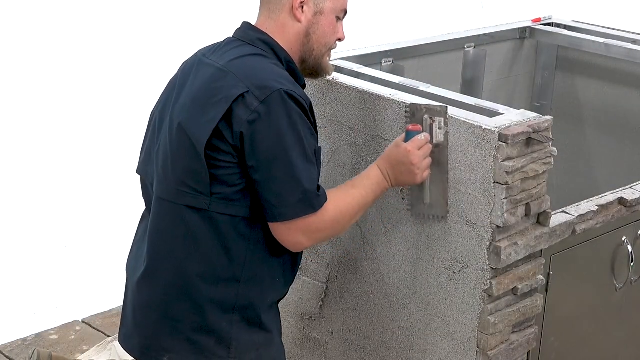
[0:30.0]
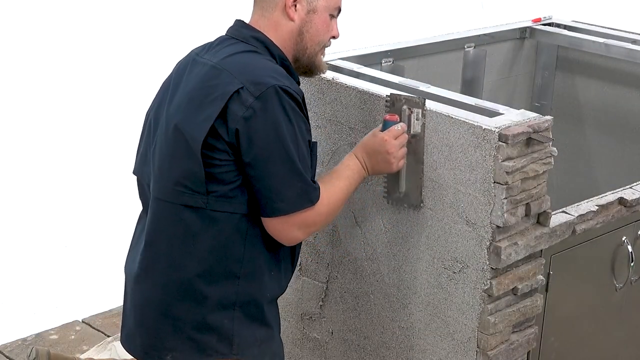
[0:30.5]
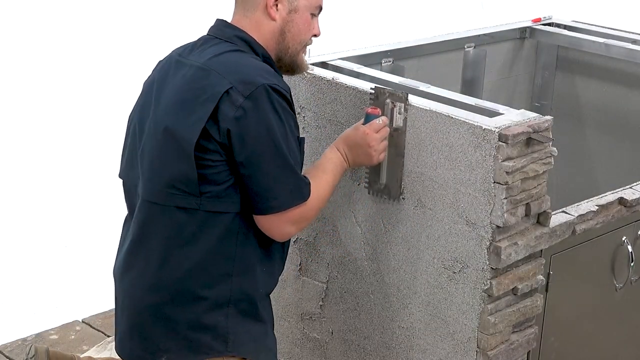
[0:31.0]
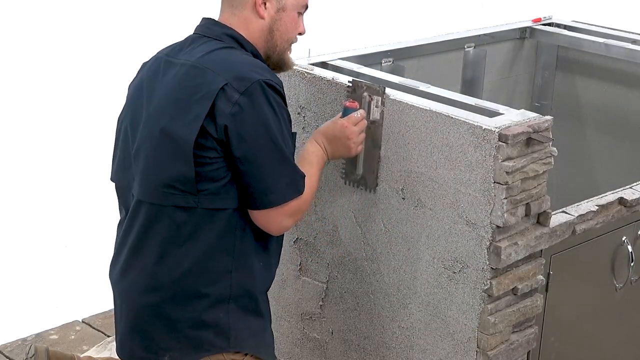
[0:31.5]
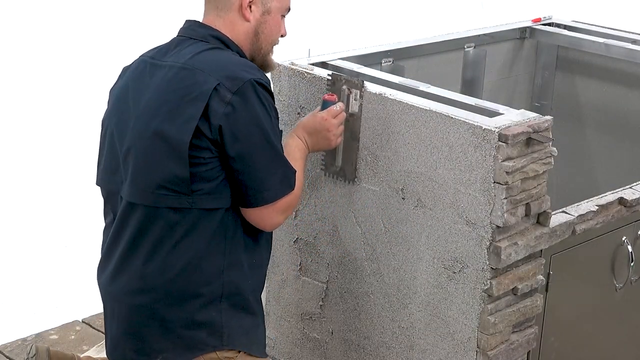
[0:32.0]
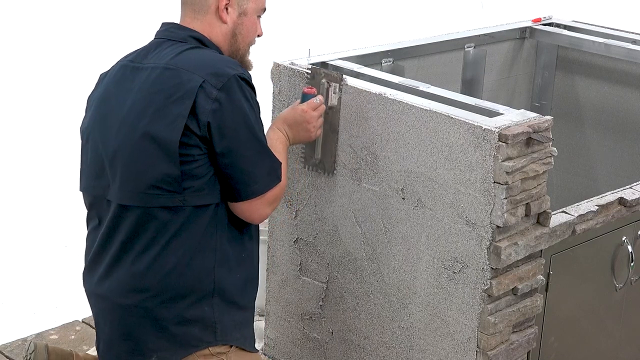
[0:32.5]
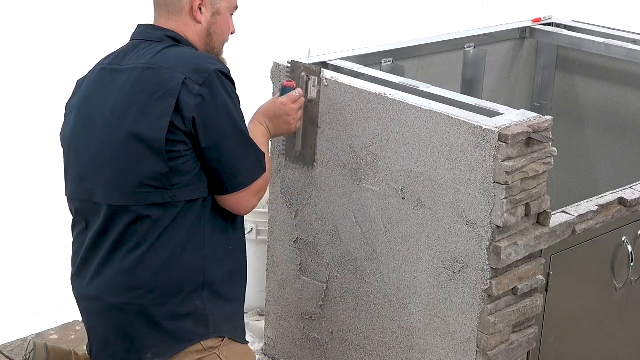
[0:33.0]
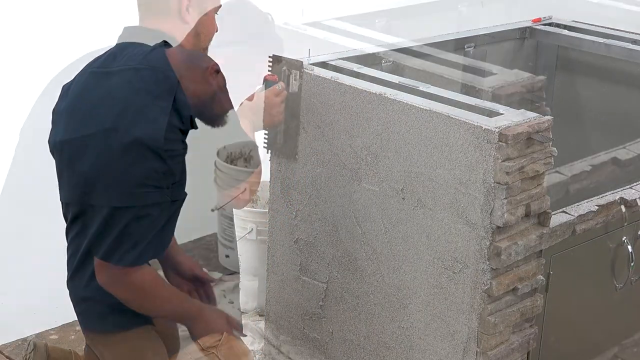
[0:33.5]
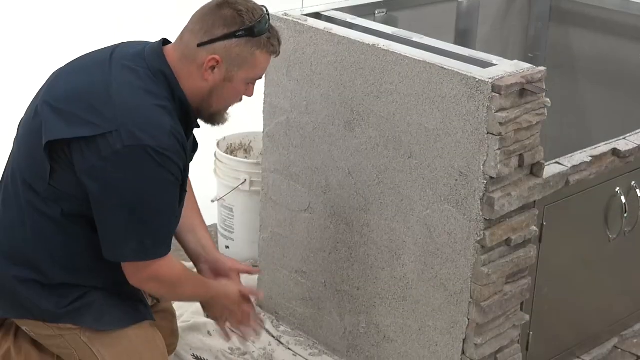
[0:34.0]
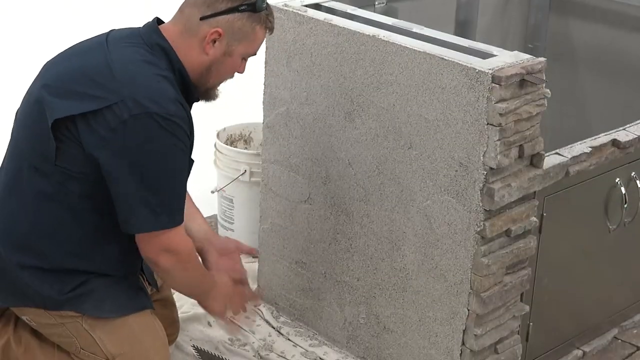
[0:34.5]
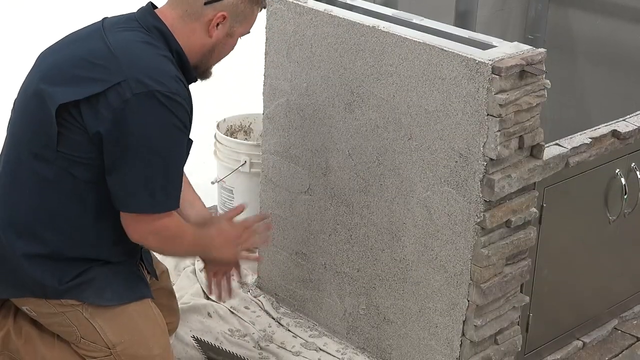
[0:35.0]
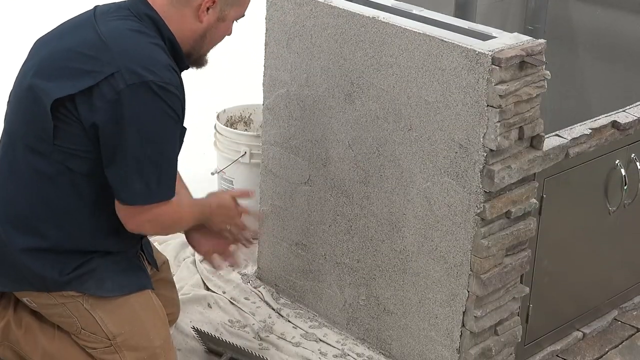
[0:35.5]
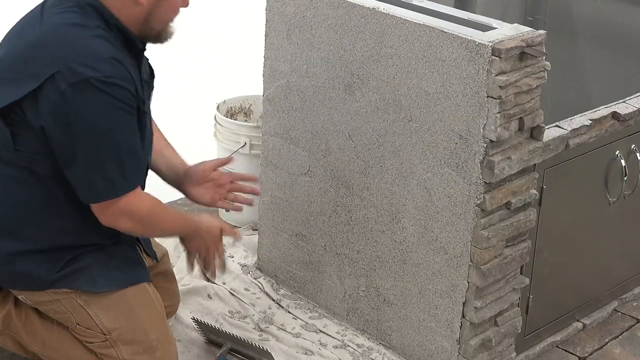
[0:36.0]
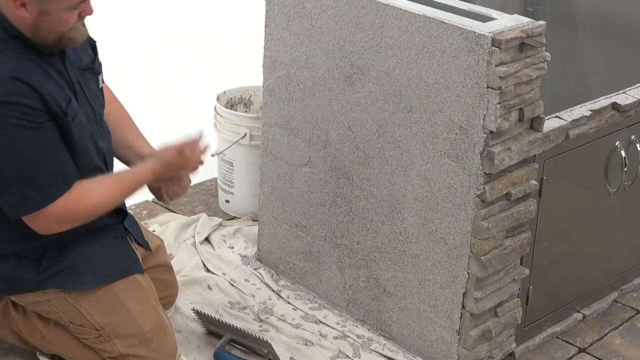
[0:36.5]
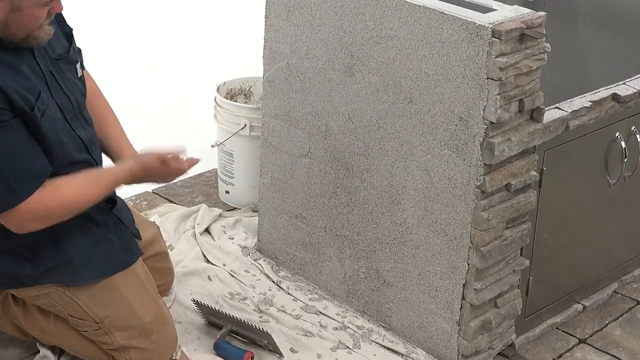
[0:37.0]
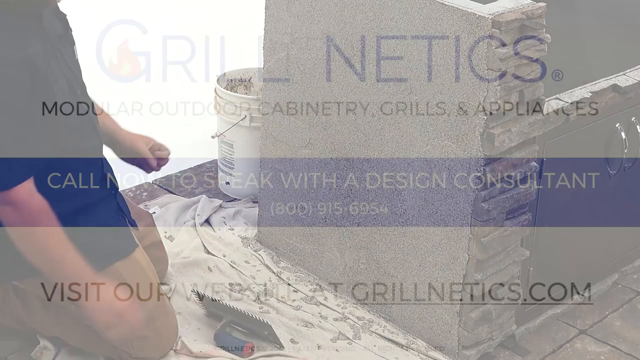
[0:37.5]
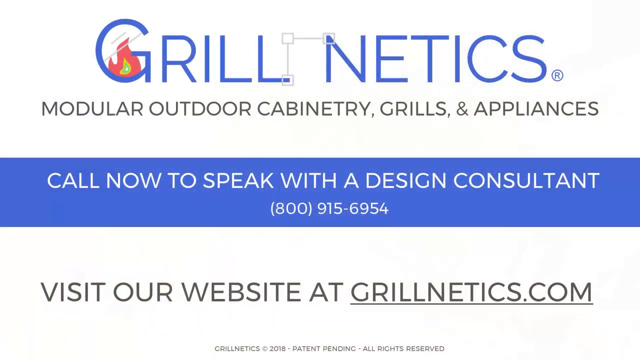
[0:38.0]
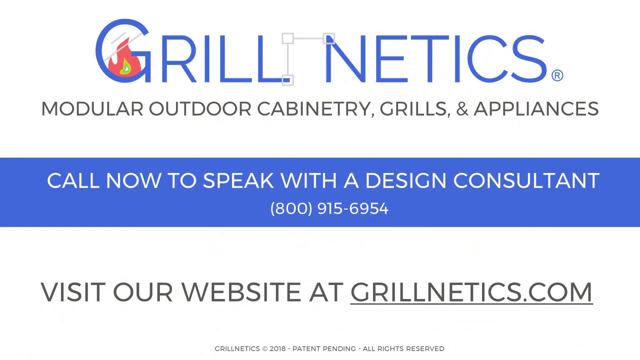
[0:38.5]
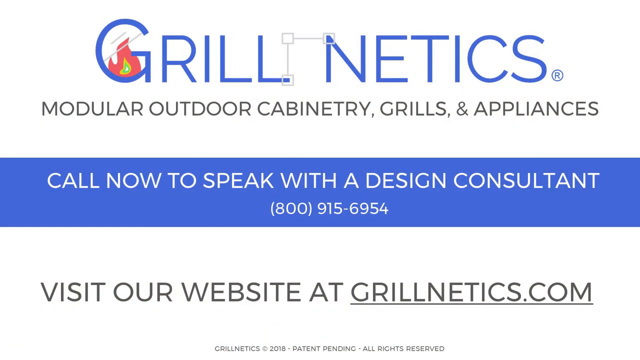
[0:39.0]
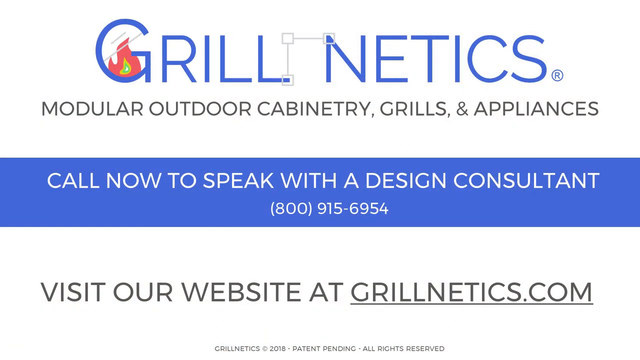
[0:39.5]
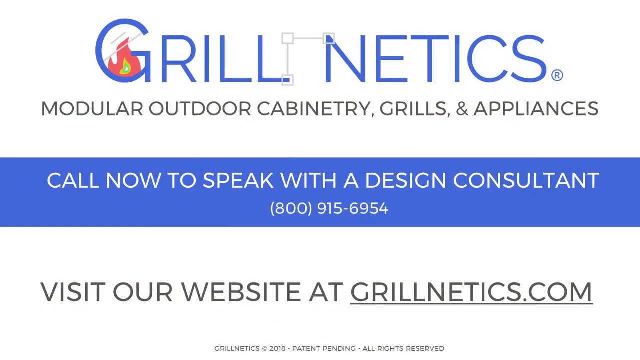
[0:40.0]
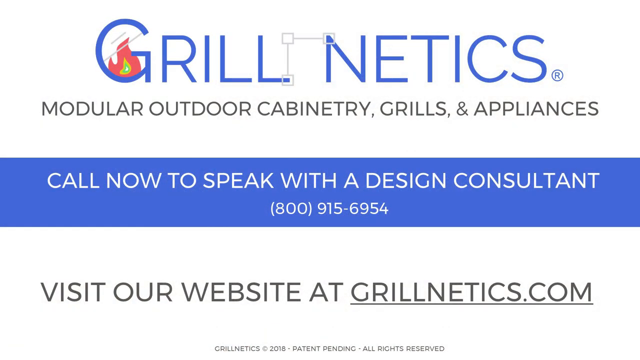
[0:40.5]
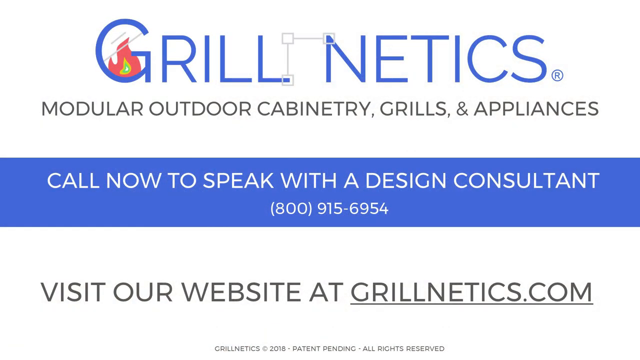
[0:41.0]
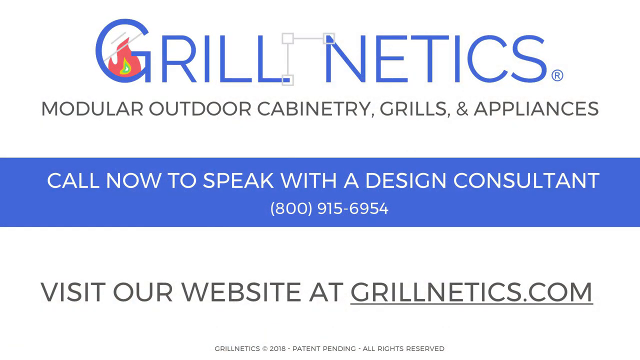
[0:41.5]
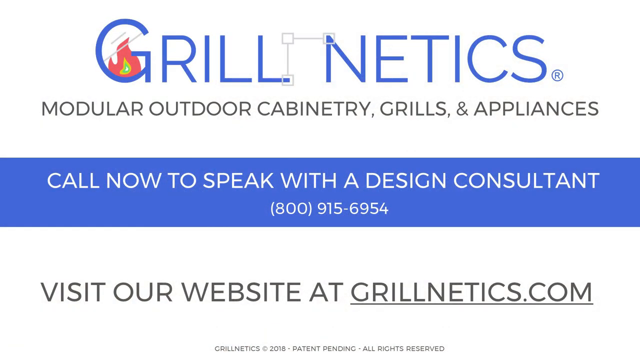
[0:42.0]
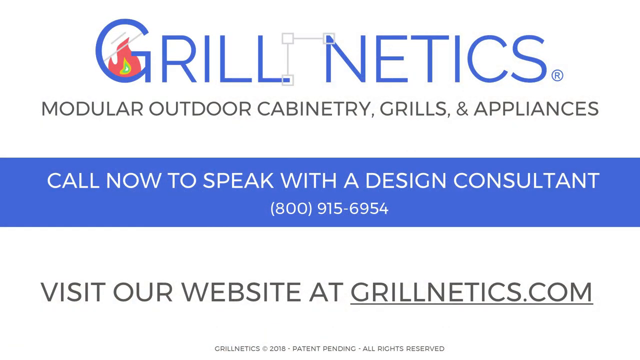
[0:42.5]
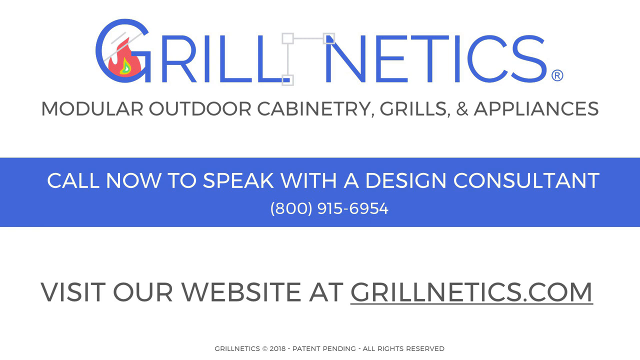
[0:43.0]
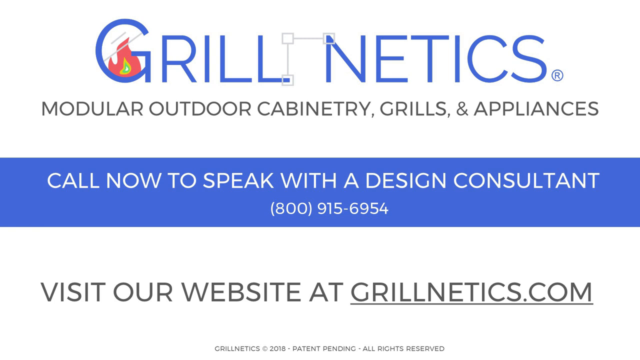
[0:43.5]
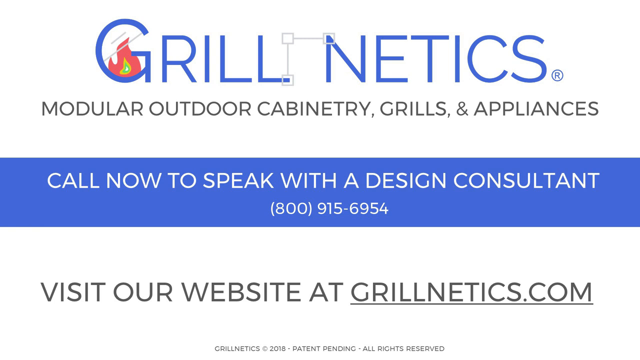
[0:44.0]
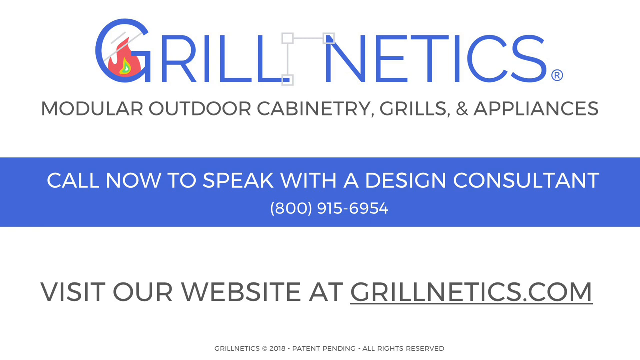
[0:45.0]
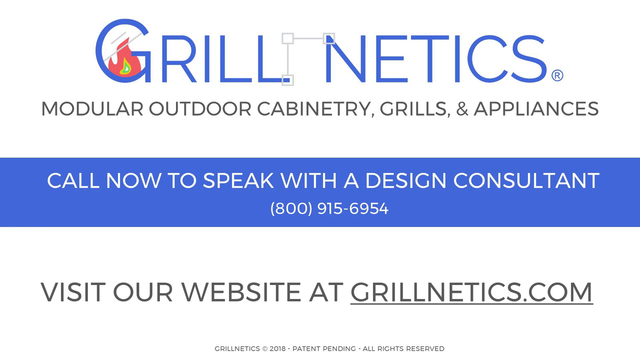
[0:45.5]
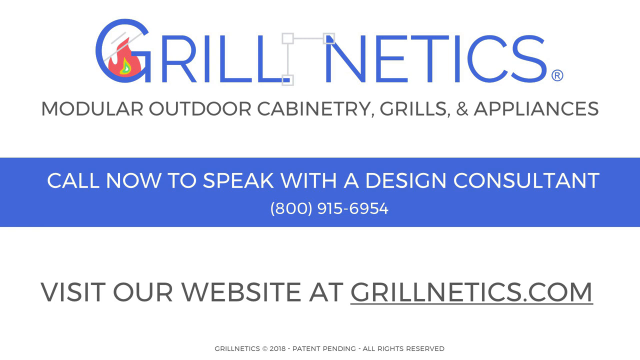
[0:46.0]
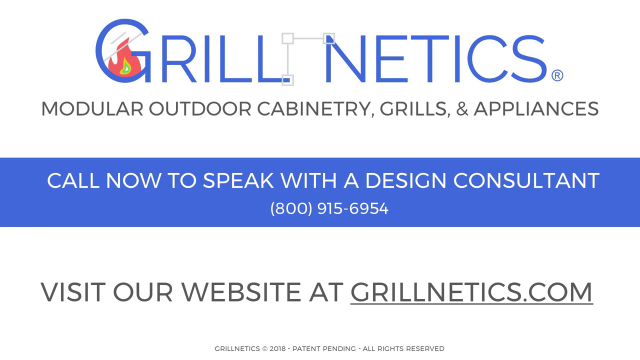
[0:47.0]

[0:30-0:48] A man puts a trowel into concrete in a white pail and applies it to the side of the barbecue, smoothing it over the entire side. He moves the pail from next to him on his right to behind the barbecue. The screen then reads "Grill netics"; the L and the N are connected by a very fine box with a line between them, there are three boxes, and the G has a flame in it. Underneath, text reads "modular outdoor cabinetry grills and appliances." A blue box says "call now to speak with this design consultant" and gives the 800 number 915-6954. At the bottom it reads "visit our website at grillnetics.com" along with "patent pending" and "all rights reserved," preceded by some text too small to read.